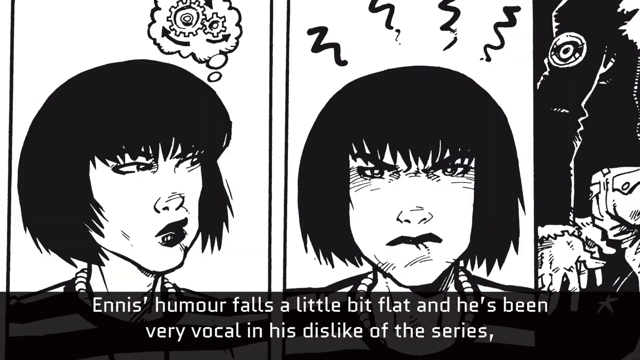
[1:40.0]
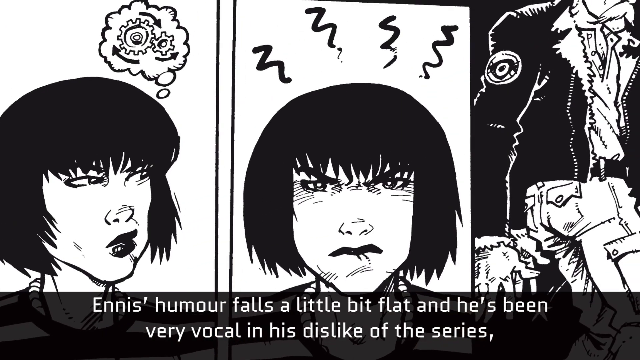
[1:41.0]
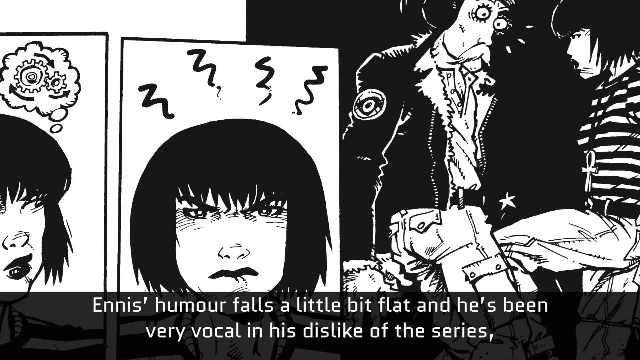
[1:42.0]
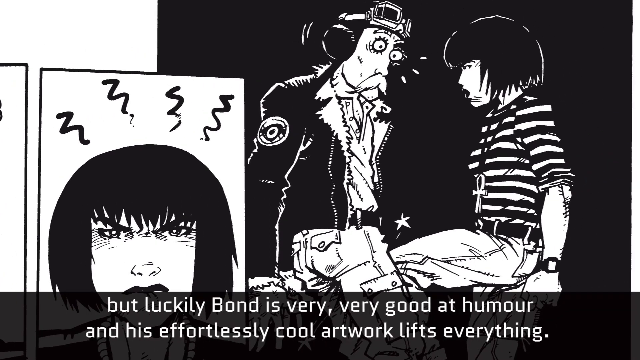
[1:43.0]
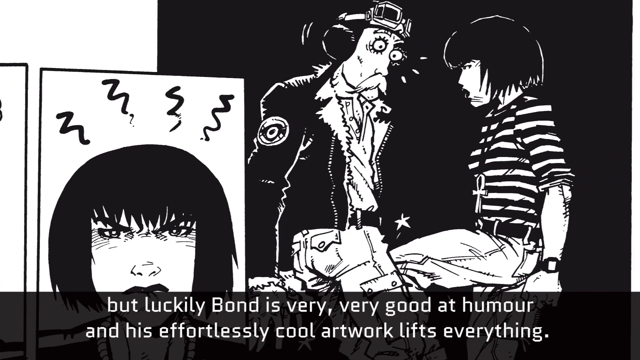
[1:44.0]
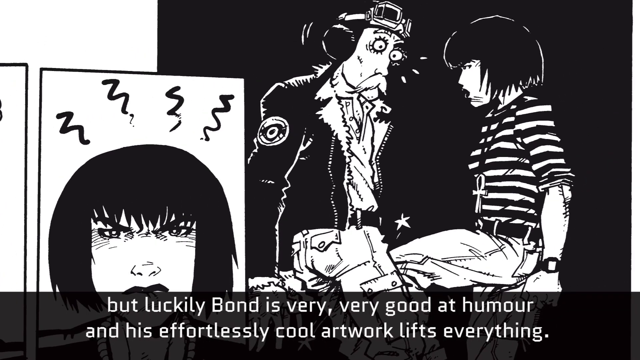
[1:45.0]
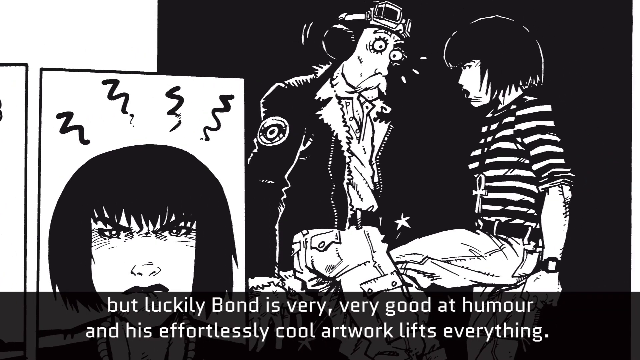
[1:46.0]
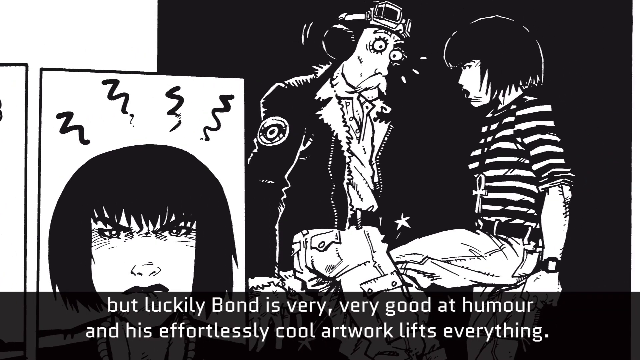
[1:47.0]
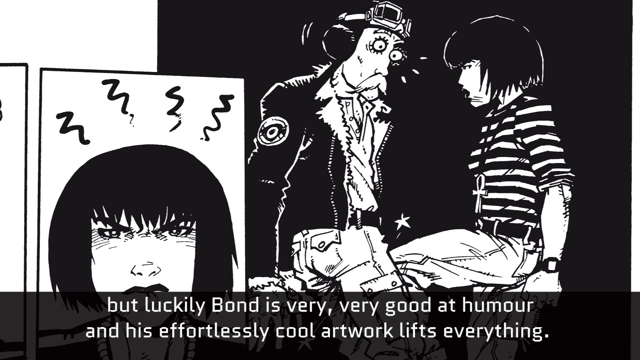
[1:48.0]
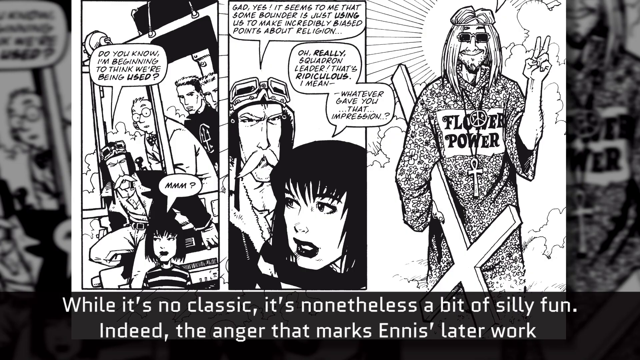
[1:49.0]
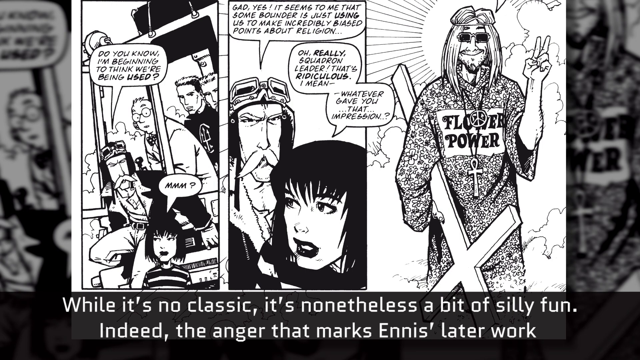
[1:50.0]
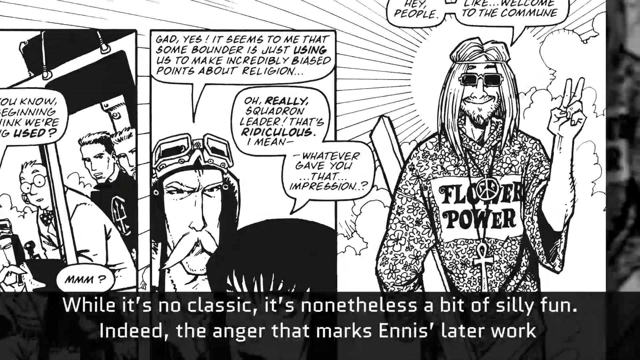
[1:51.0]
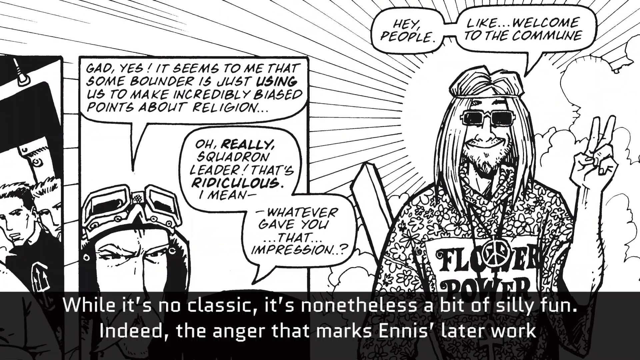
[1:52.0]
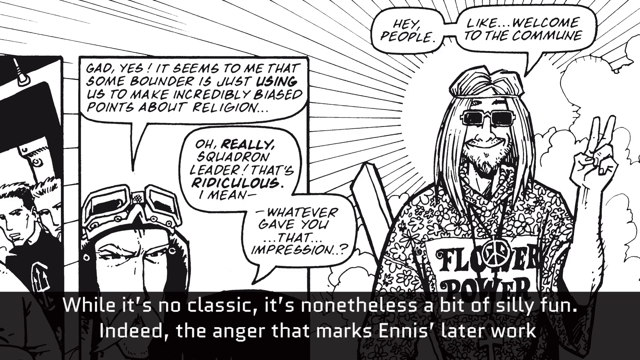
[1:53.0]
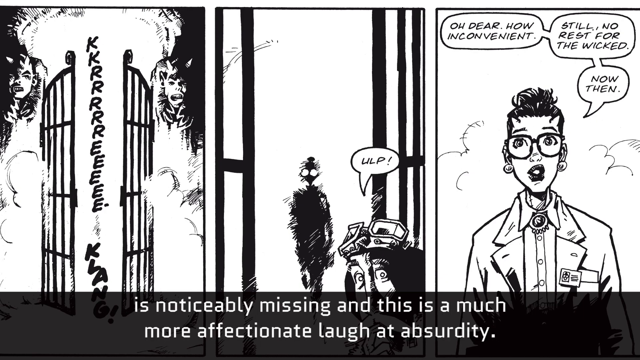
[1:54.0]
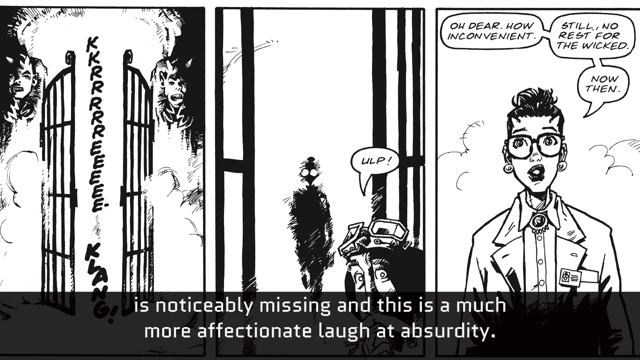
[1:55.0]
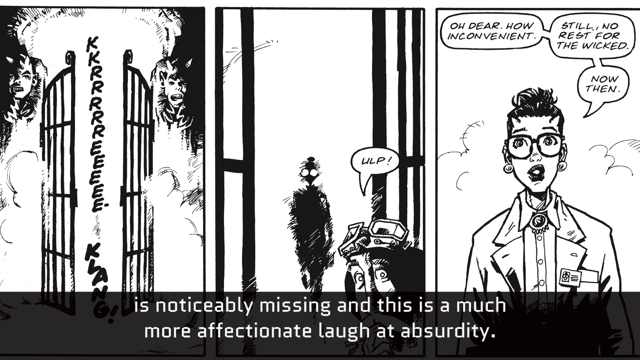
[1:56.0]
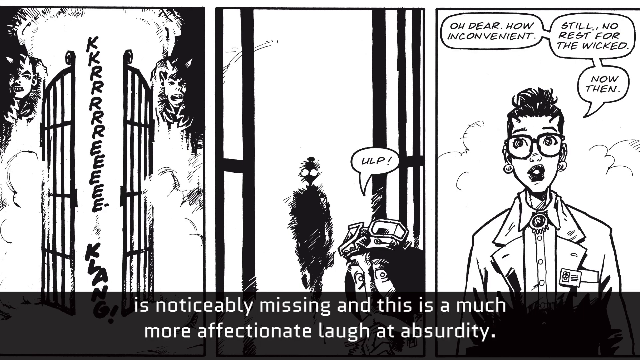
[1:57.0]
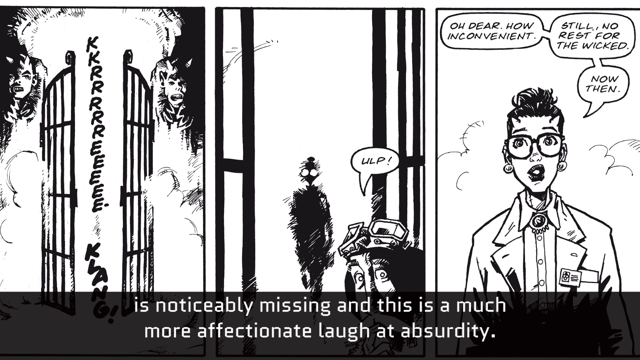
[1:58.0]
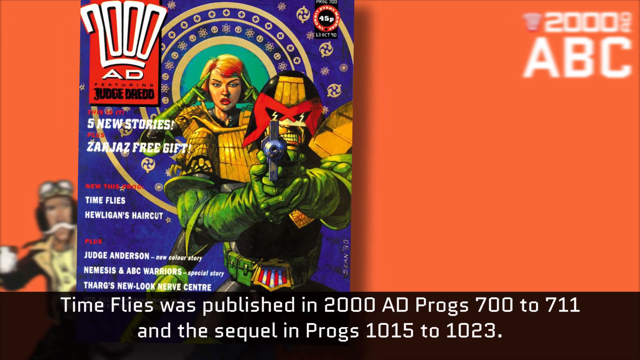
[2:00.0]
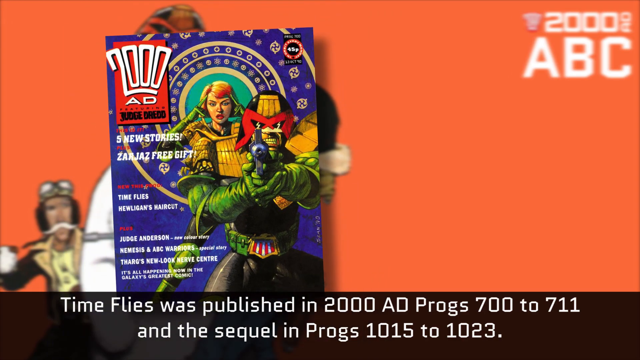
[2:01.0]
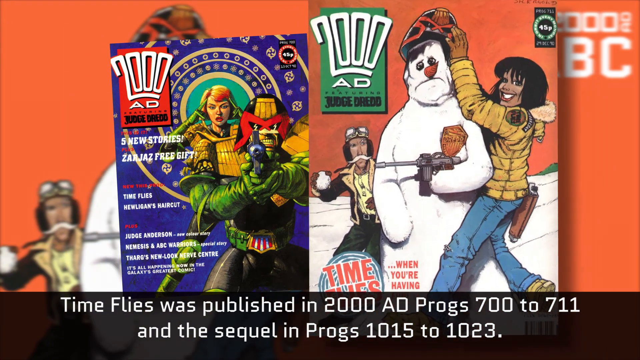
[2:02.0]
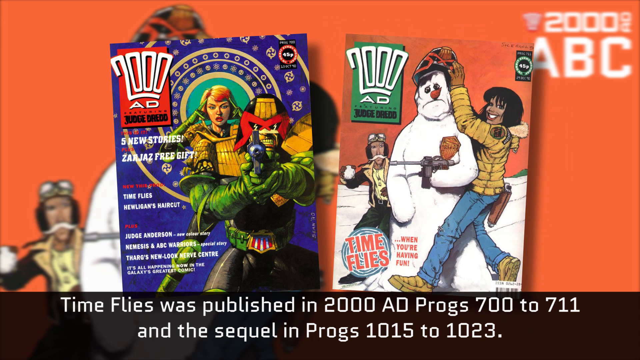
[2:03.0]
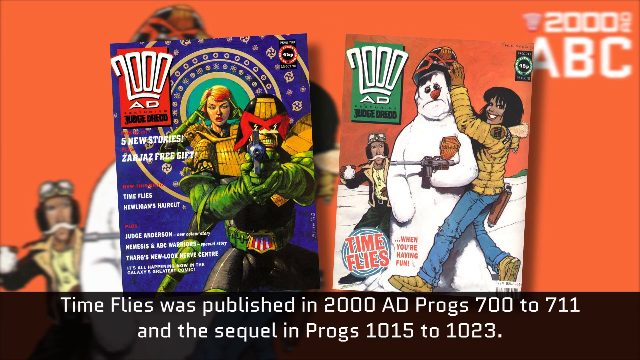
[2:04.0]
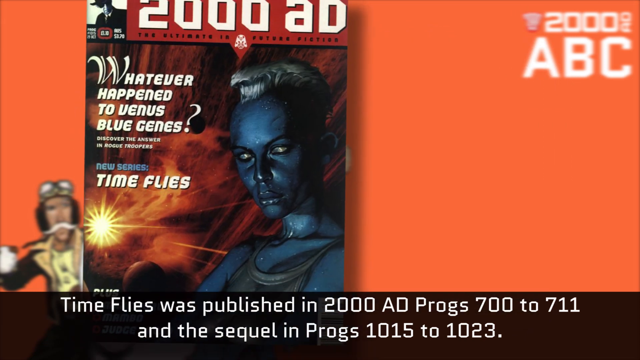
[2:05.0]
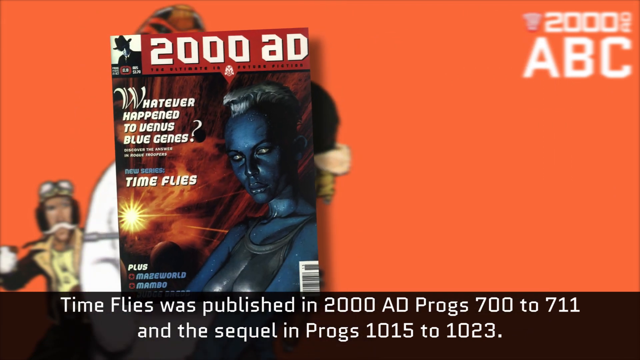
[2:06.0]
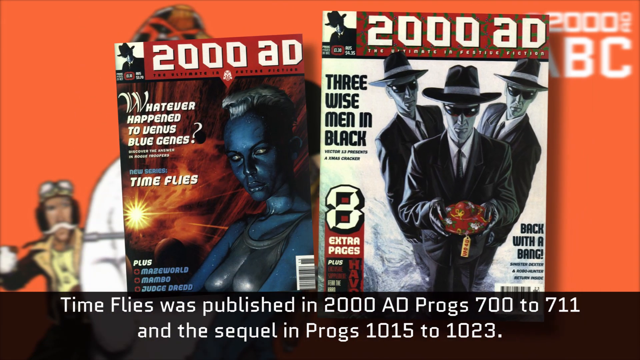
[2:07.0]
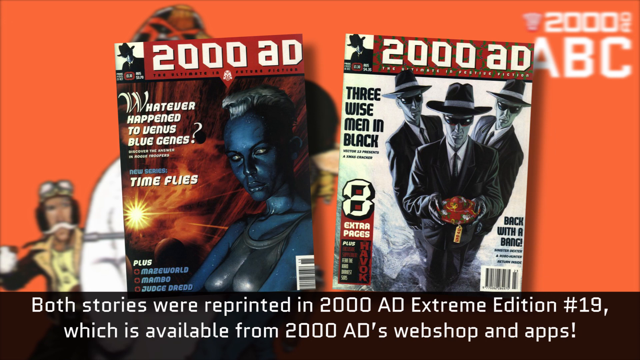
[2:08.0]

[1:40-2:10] The black and white comic with the short-haired girl continues, with writing at the bottom saying "But luckily Bond is very, very good at humour and his effortless cool artwork lifts everything." The girl with the short bobbed hair wears a stripy top and a black wristwatch and is talking to the pilot, who looks very confused. In another comic the pilot says "do you know I'm beginning to think we're being used" and the girl says "hmm". In the next part the pilot says "god yes it seems to me" that someone "is just using us to make incredibly biased points about religion", and the girl says "oh really squadron leader that's ridiculous". Then a Jesus is shown standing with a peace sign, holding a cross and wearing a dress with flower power; the text at the bottom says "while it's no classic it's nonetheless a bit of silly fun". The view zooms in on the Jesus, who says "hey people like welcome to the community". Another comic strip shows the gates of heaven opening, the pilot going "gulp", and somebody walking to the gates who appears to be a woman, saying "oh dear how inconvenient, still no rest for the wicked". The writing at the bottom mentions an "affectionate laugh at absurdity". The video cuts to the orange background, and a 2000 AD Judge Dredd comic appears on the left of the screen, showing a drawing of Judge Dredd with a woman behind him. Then a 2000 AD Judge Dredd cover shows a woman putting a Judge Dredd helmet on a snowman who is holding a Tommy gun. The writing at the bottom says "Time Flies was published in 2000 AD Progs 700-711 and the sequel in Progs 1015-1023." Another 2000 AD comic shows a woman with blue skin, and next to her is a 2000 AD comic with three wise men in black. The text reads "Both stories were reprinted in 2000 AD Extreme Edition 9 which is available from 2000 AD's webshop and apps." Then another comic appears on the screen.